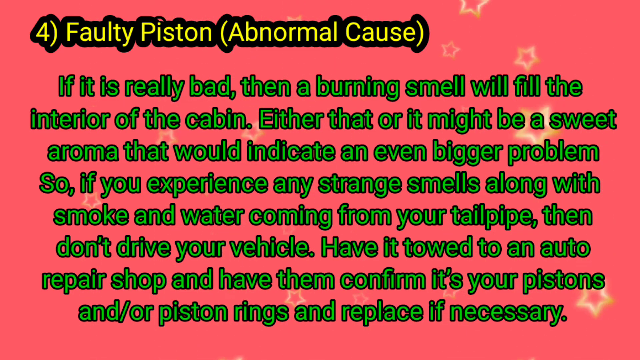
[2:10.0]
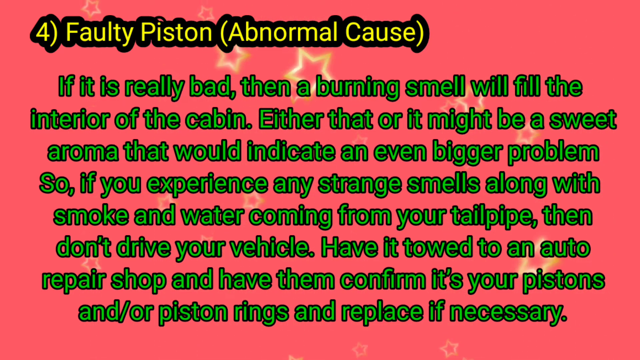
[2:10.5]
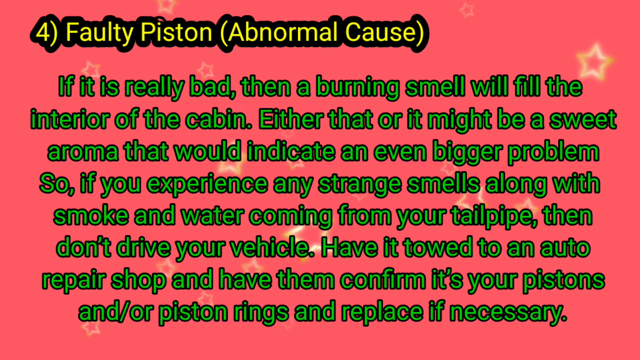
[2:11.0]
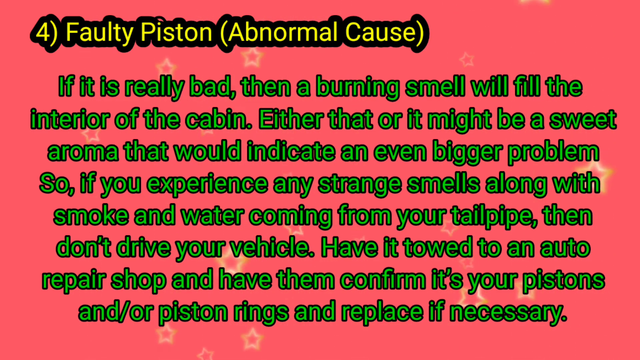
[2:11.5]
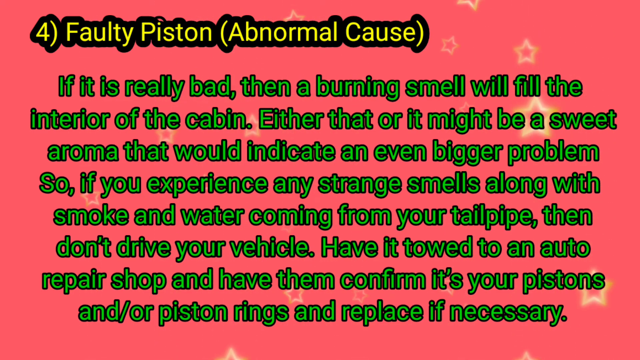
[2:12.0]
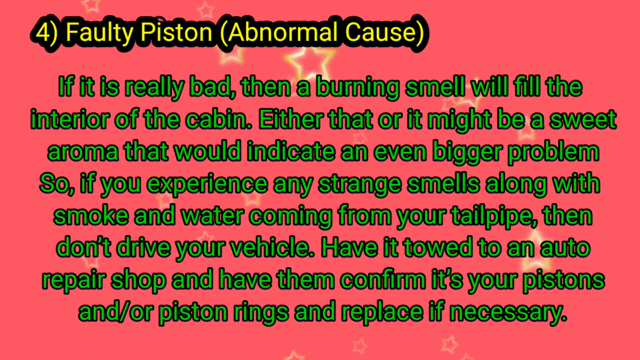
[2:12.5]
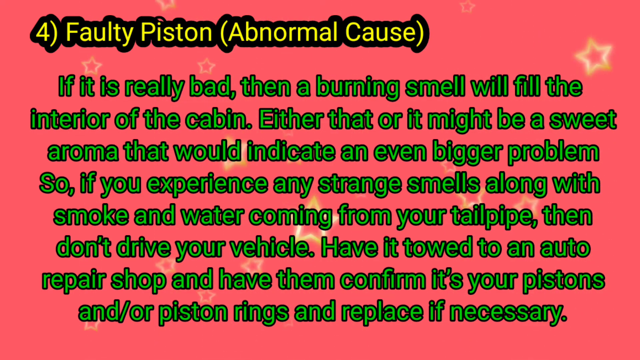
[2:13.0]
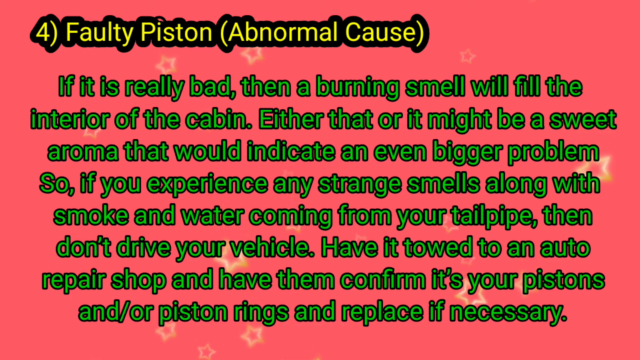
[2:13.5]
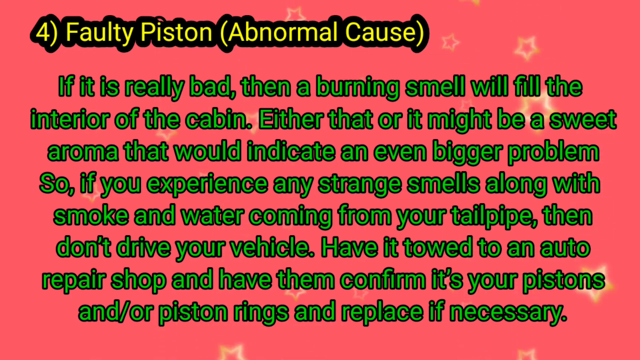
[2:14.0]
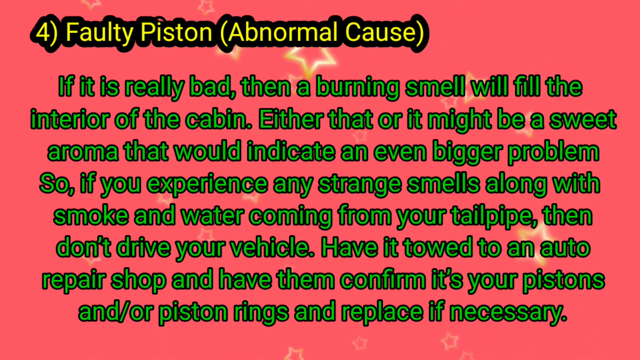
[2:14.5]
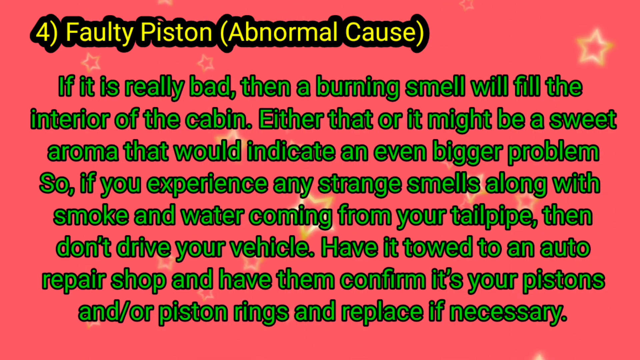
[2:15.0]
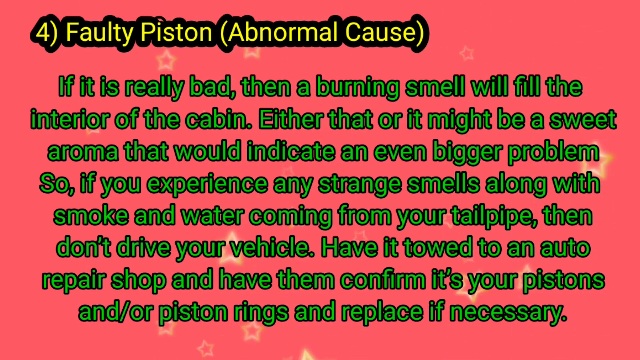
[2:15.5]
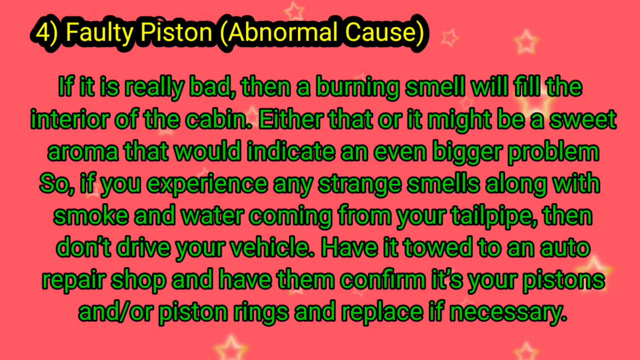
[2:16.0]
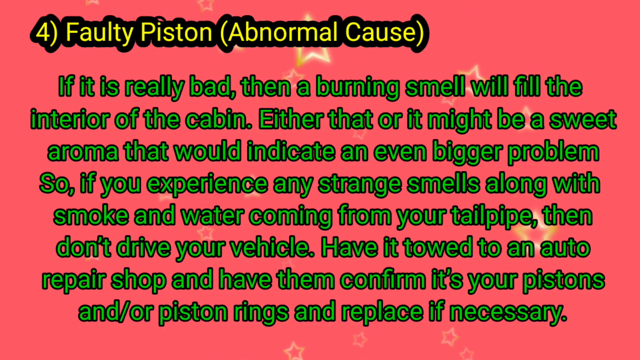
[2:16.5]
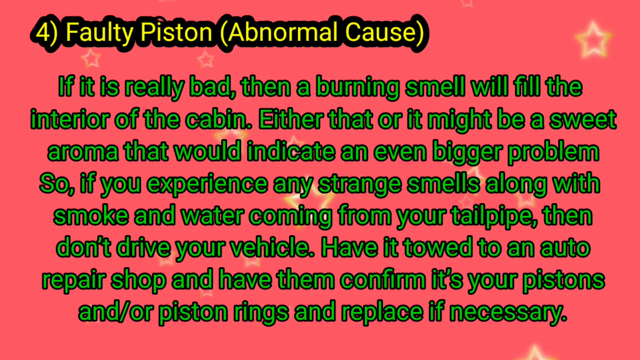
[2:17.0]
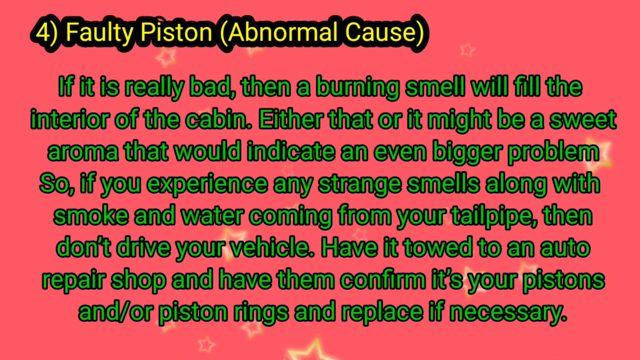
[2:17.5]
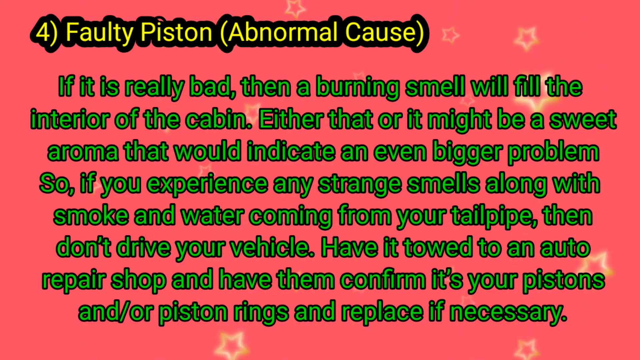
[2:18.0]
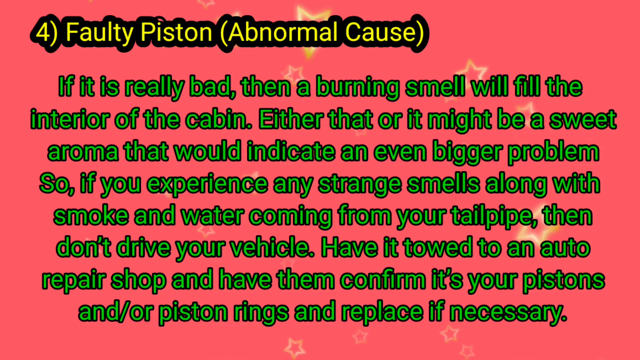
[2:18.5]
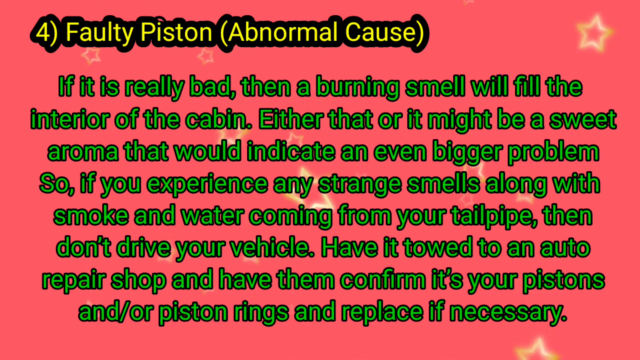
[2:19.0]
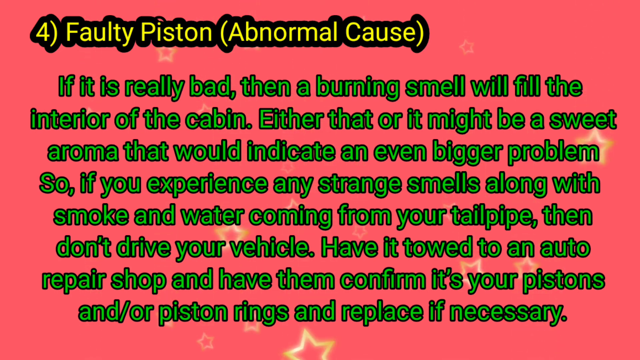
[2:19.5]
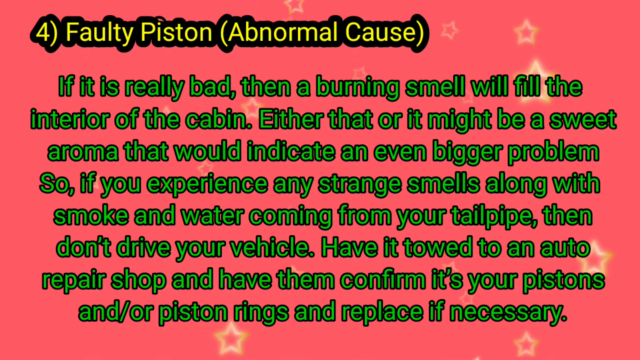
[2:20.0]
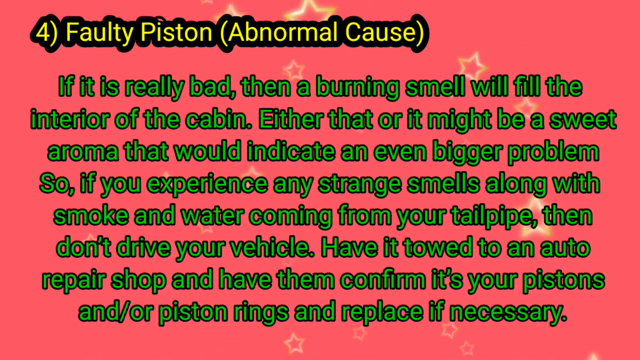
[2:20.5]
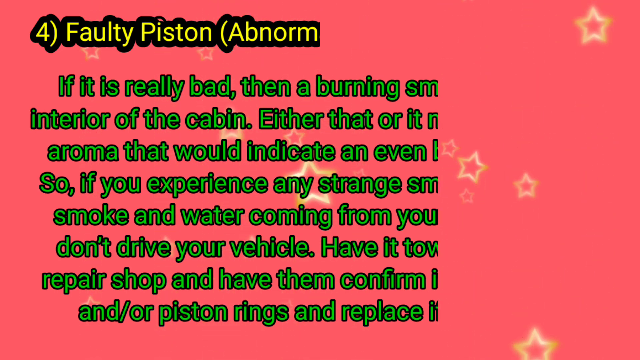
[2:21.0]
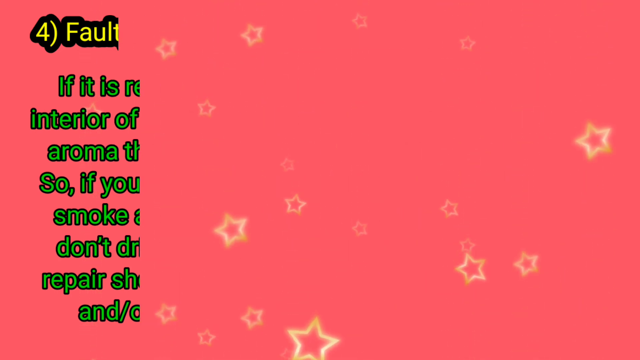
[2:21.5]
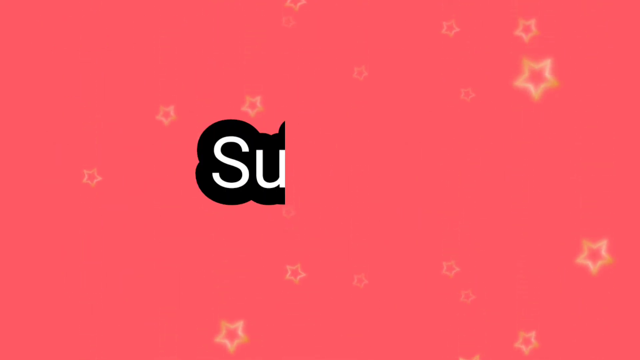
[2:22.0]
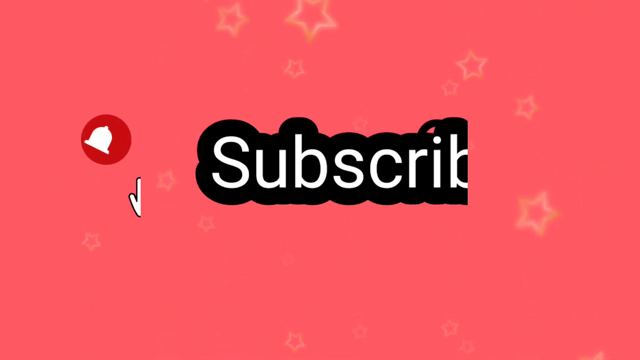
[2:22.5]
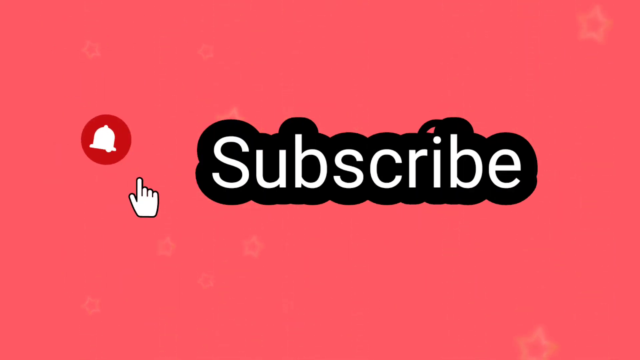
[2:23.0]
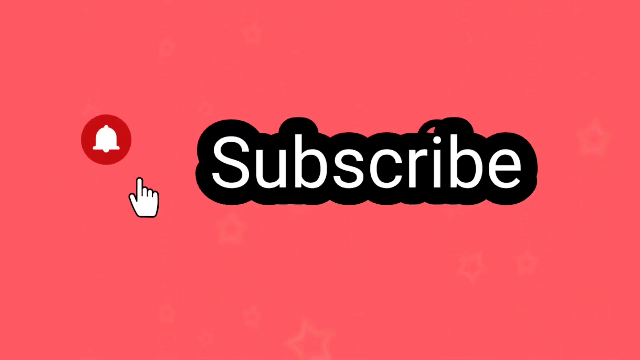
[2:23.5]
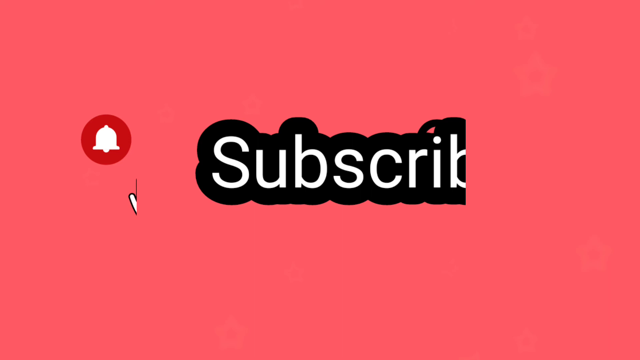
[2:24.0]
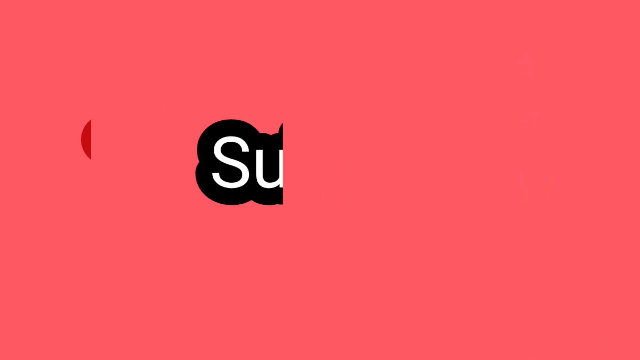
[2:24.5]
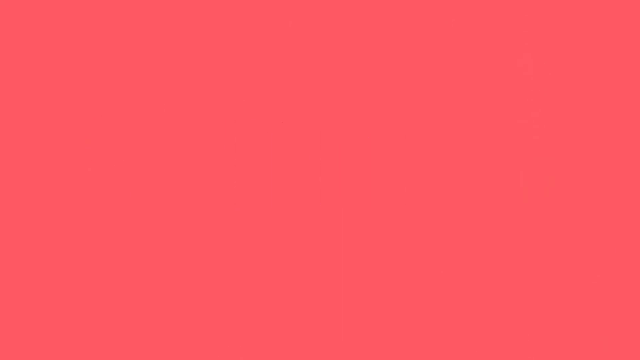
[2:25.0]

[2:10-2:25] Hollow yellow stars fall from the top over a pink background. Yellow lettering at the top left reads "four faulty pistons, abnormal cause", and green text below reads "if it is really bad, then a burning smell will fill the interior of the cabin. Either that, or it might be sweet aroma that would indicate an even bigger problem." It continues with advice not to drive the vehicle and to "Have it towed to an auto repair shop and have them confirm it's your pistons and or piston rings and replace if necessary." New graphics then appear: a red circle on the left side with a white bell inside it, and just below it a white hand with the index finger pointed forward. On the right side, white lettering reads "subscribe", with a black bubbled outline around it.